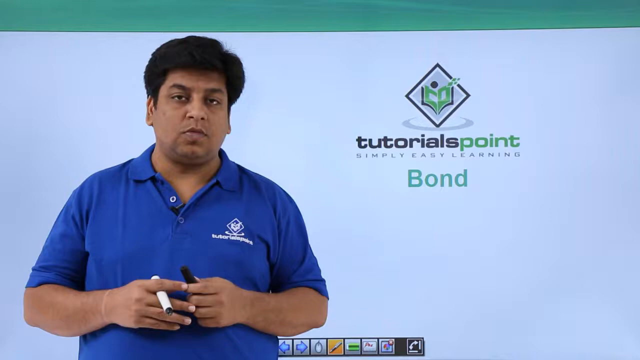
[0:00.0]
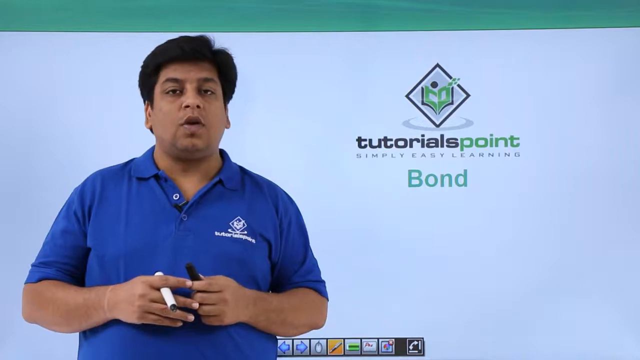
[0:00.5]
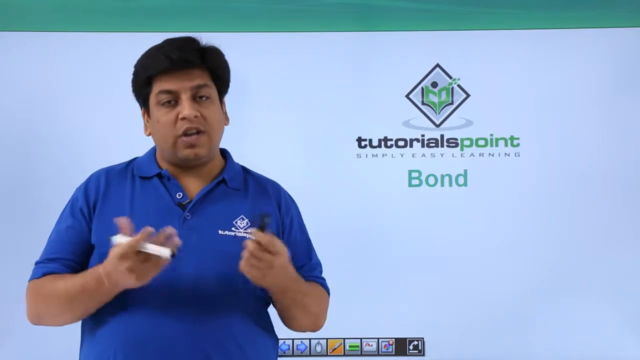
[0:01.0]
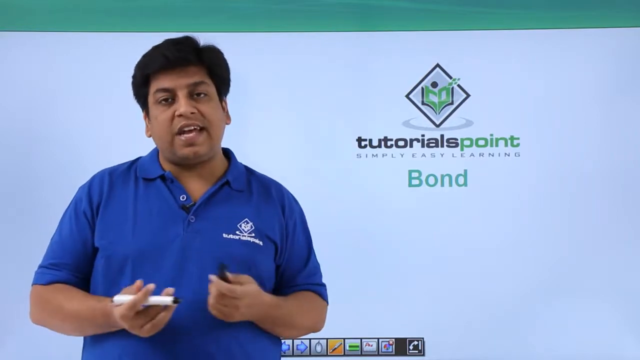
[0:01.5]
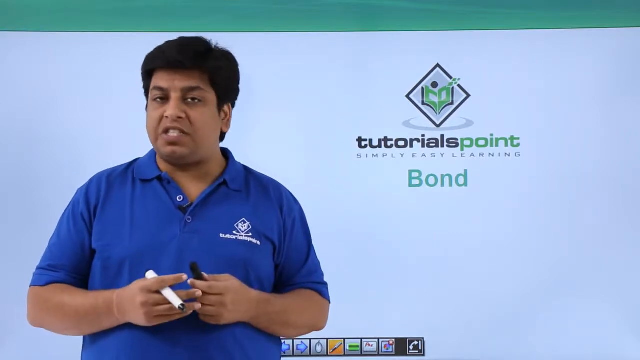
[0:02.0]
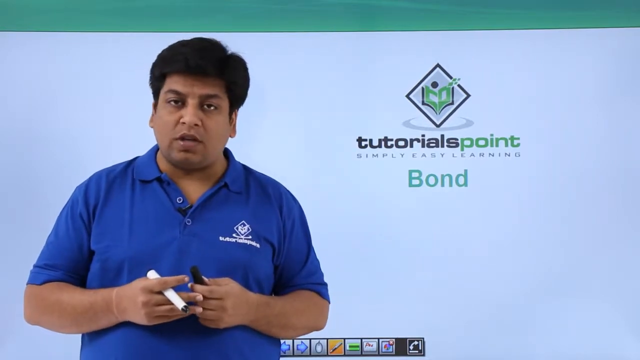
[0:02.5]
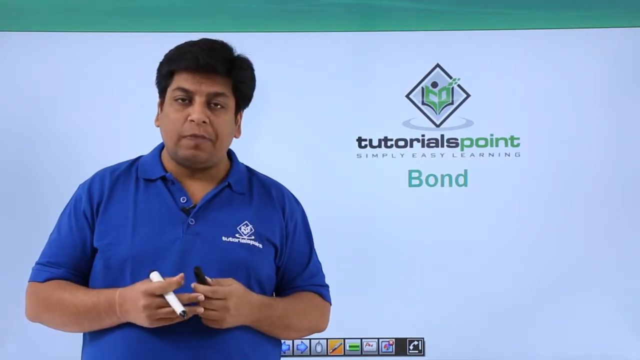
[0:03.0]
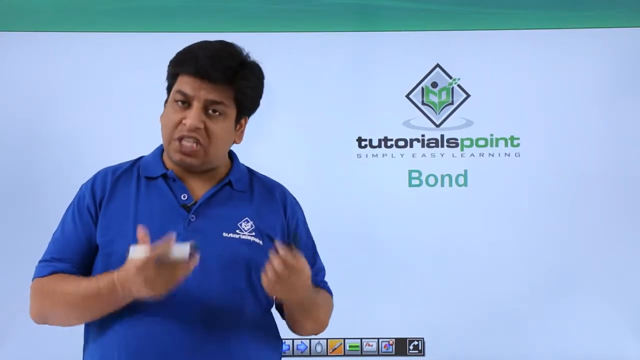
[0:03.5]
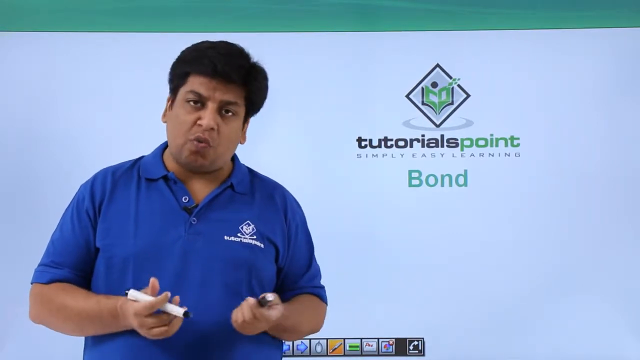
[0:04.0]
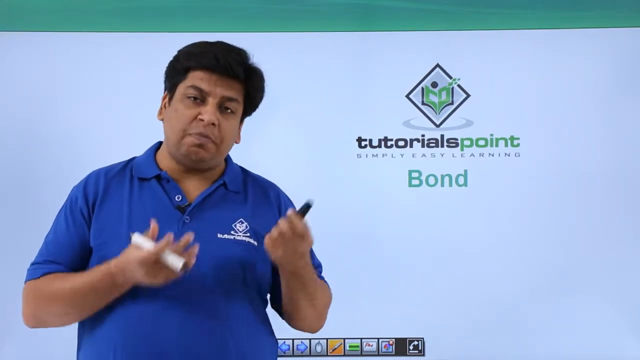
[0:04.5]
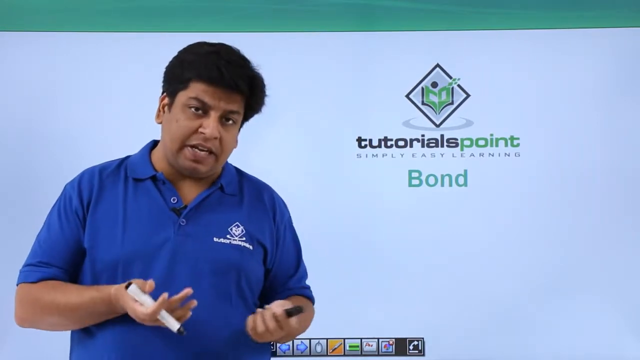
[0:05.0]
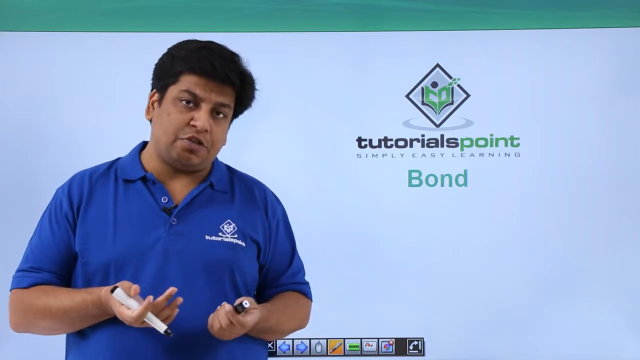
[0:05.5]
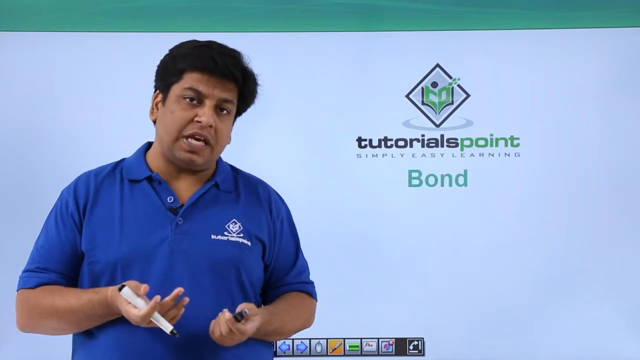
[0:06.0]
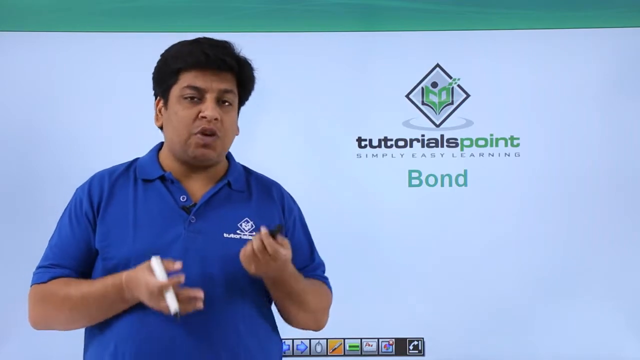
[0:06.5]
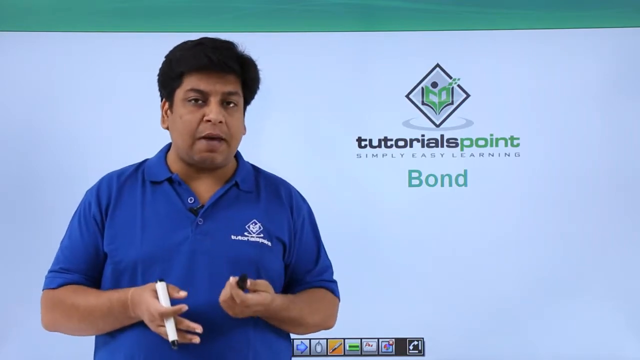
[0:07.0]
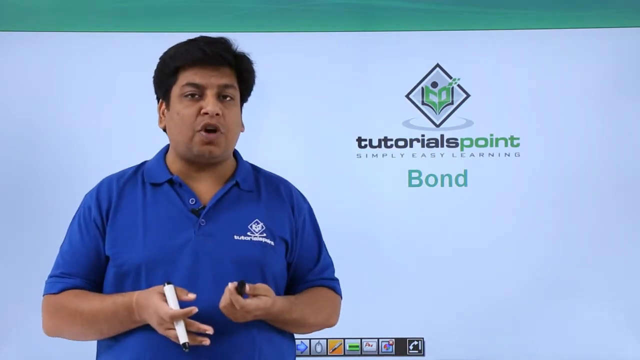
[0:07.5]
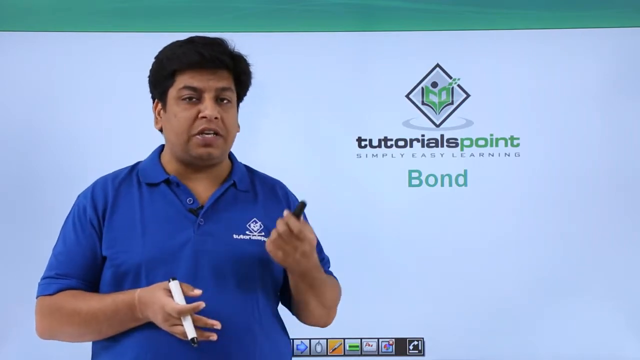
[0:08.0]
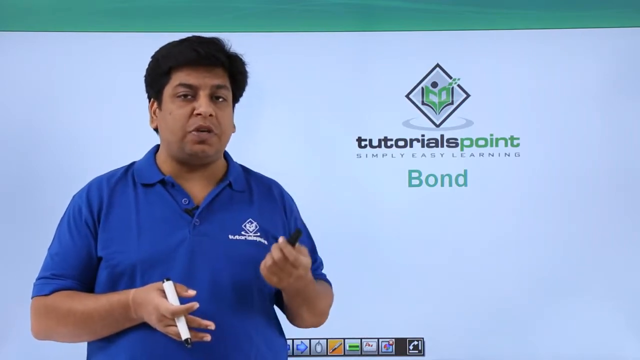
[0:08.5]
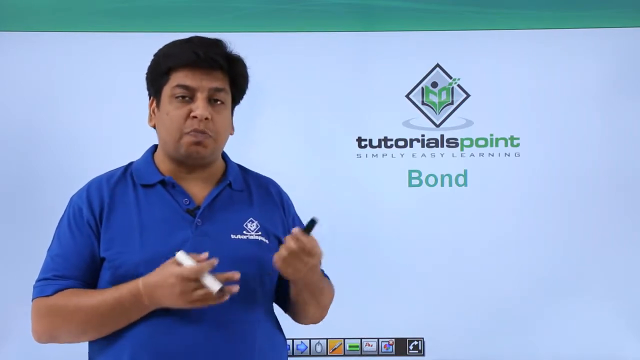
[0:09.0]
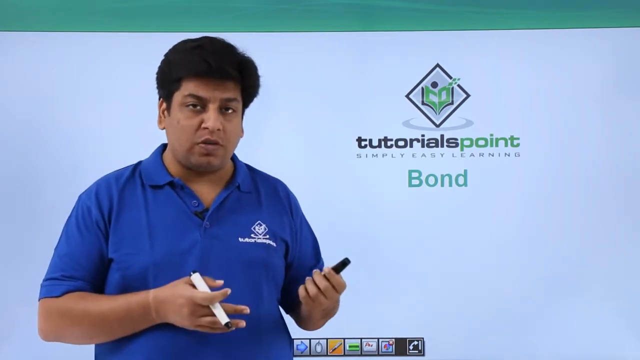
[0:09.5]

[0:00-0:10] A man who looks to be Indian is on the left side of the screen, holding a whiteboard marker and wearing a blue polo shirt with a logo on the left breast. On the right side of the screen is what is maybe a smartboard or a whiteboard showing the Tutorials Point Simply Easy Learning logo: the text "Tutorials Point Simply Easy Learning" with the company logo above it. Under that is the word "Bond". The man looks at the camera and speaks, holding the marker in his right hand and the marker cap in his left hand.